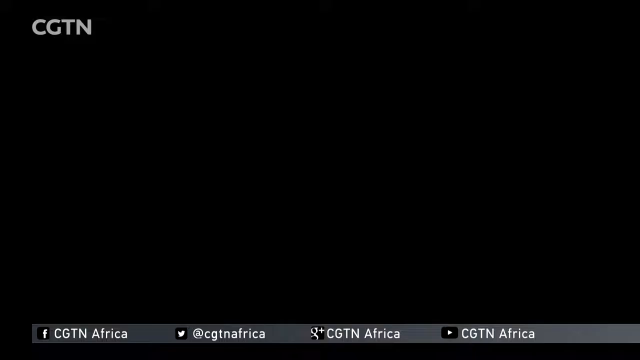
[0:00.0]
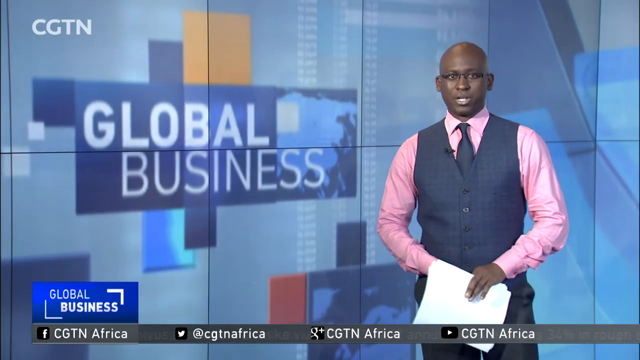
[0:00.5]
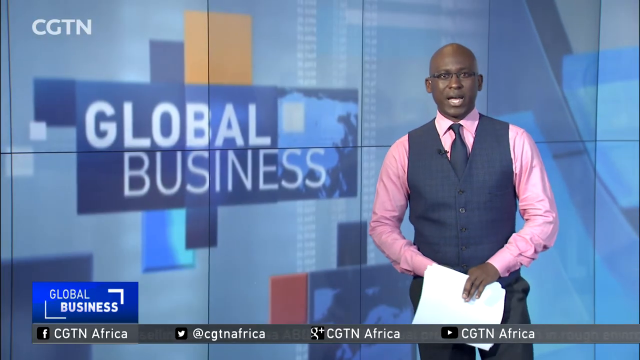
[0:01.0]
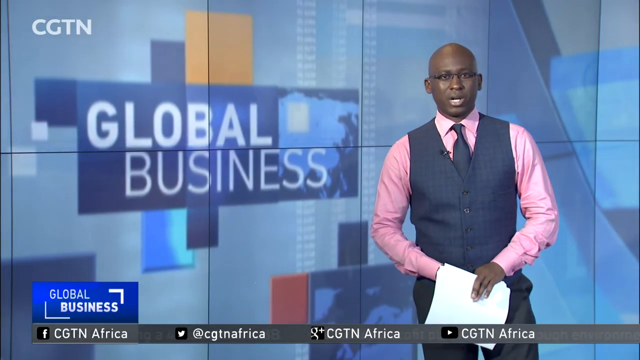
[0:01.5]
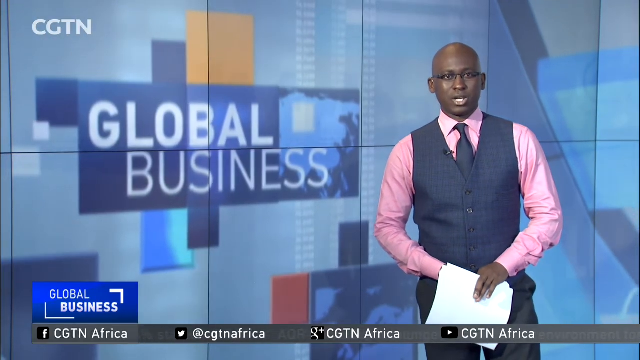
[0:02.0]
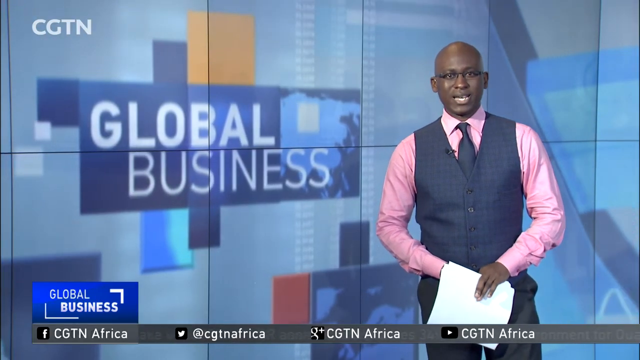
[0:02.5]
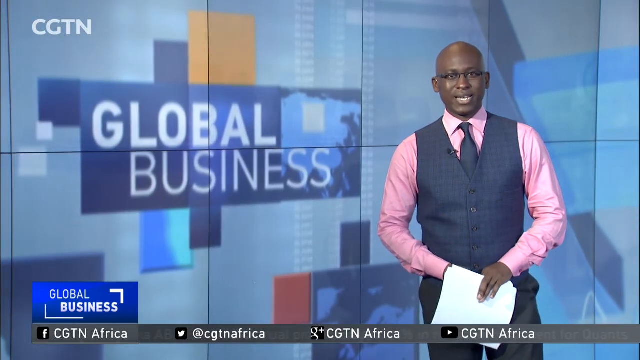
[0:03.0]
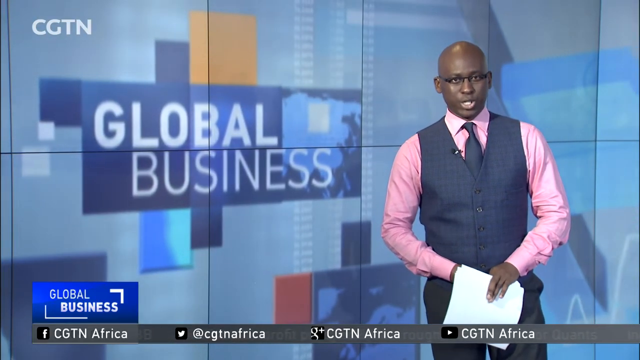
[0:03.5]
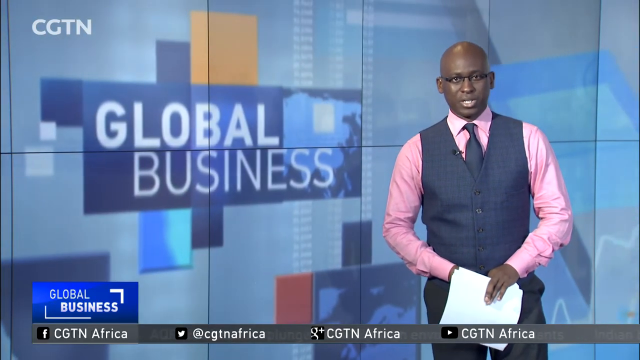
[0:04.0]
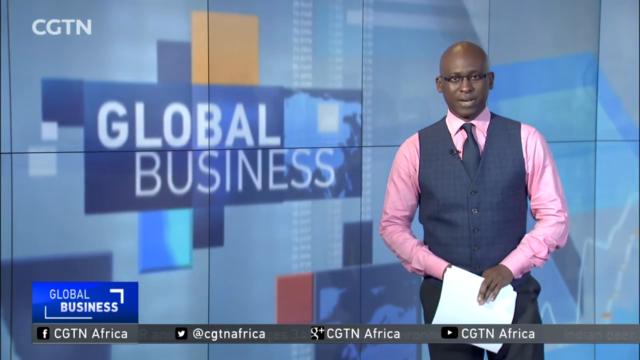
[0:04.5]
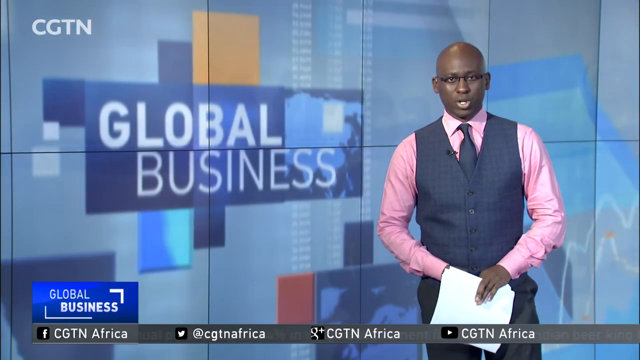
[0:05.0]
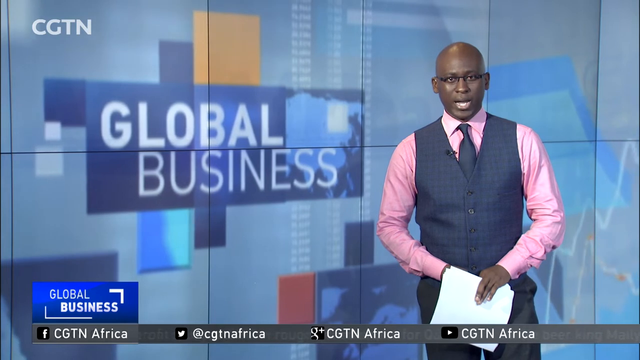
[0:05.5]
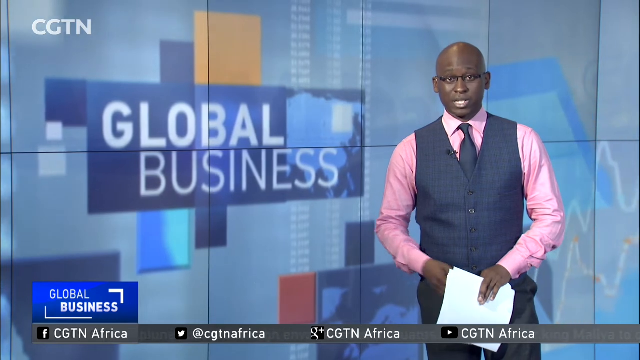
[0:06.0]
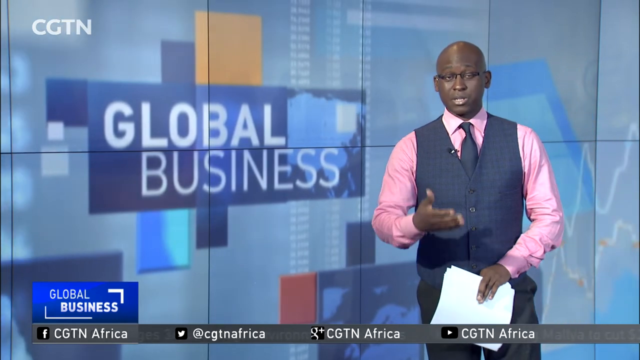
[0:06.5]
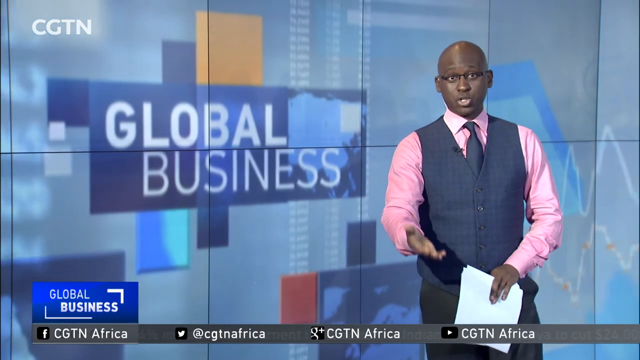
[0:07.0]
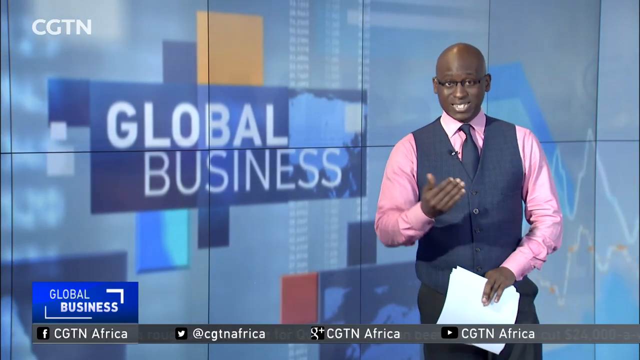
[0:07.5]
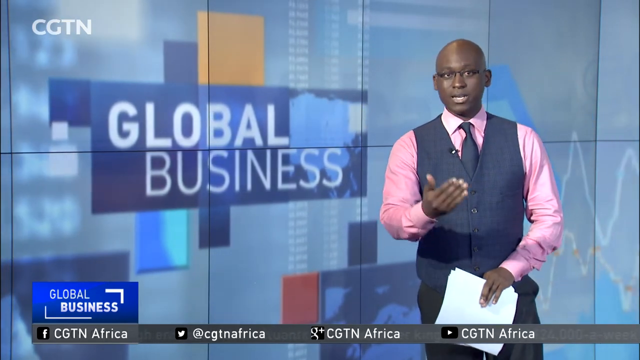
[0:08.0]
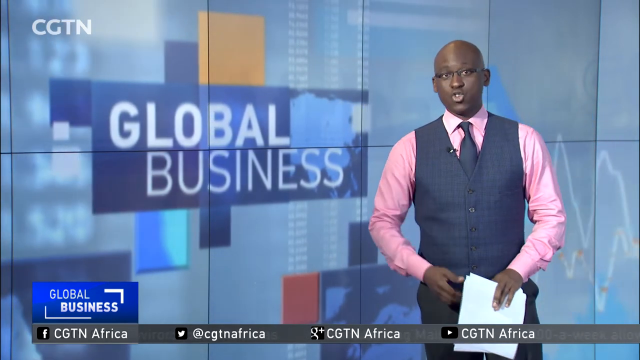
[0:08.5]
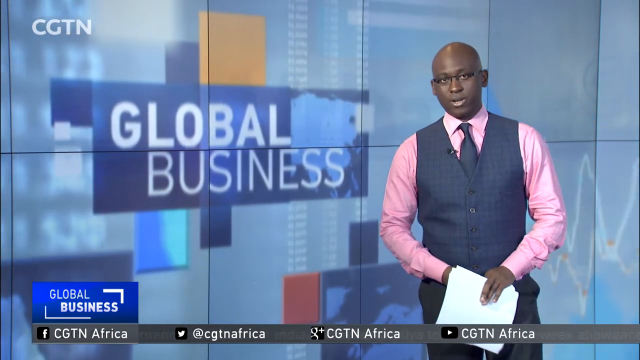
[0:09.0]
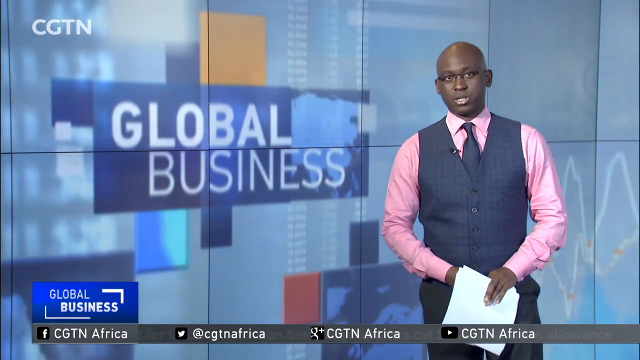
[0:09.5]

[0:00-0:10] The words "Global Business" appear toward the centre left of the screen, with some muted skyscrapers and shapes behind them. A presenter stands on the right of the screen: a Black man in a pink shirt, a blue-gray waistcoat and a black tie, holding a sheaf of papers in his left hand. At first his right hand is hidden behind the papers. He seems to be speaking, his mouth opening and closing, and the background begins to turn slightly so that new colours appear from the right. He lifts out his right hand palm upwards, almost as if receiving or collecting something, then moves the palm toward his body and back behind the papers.